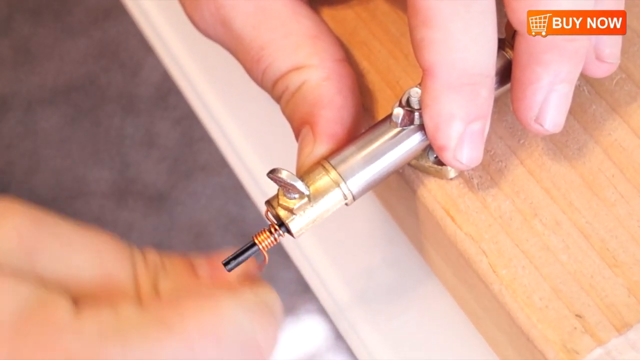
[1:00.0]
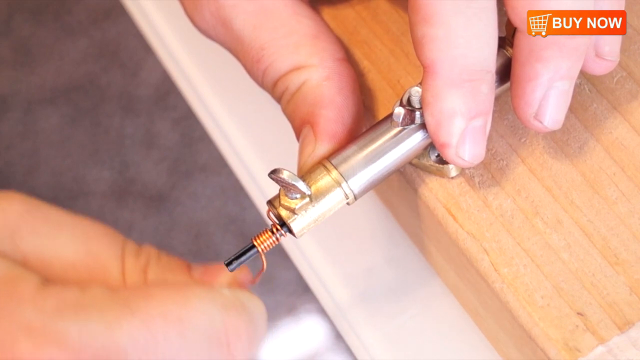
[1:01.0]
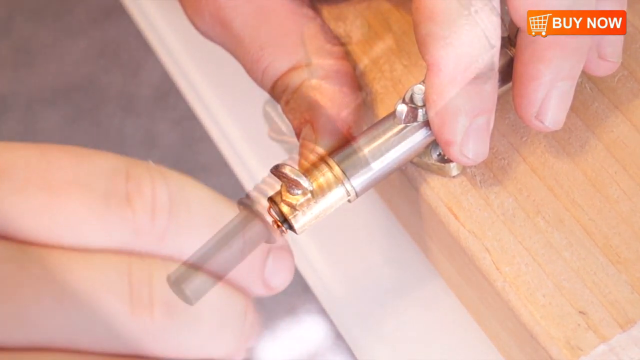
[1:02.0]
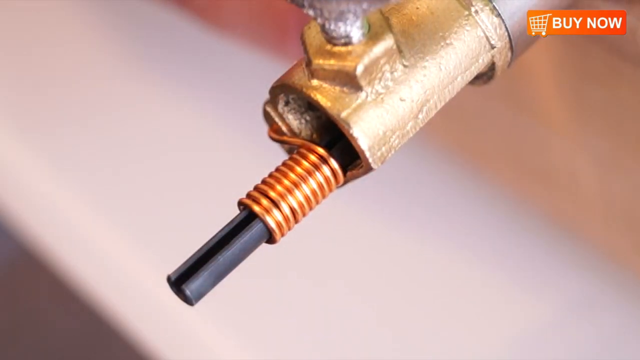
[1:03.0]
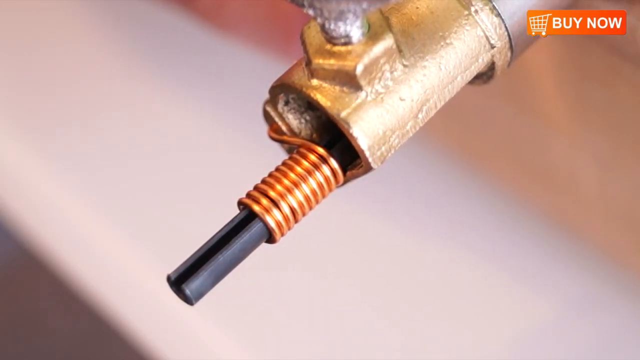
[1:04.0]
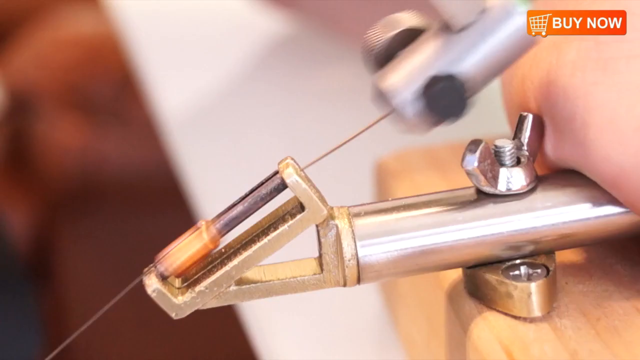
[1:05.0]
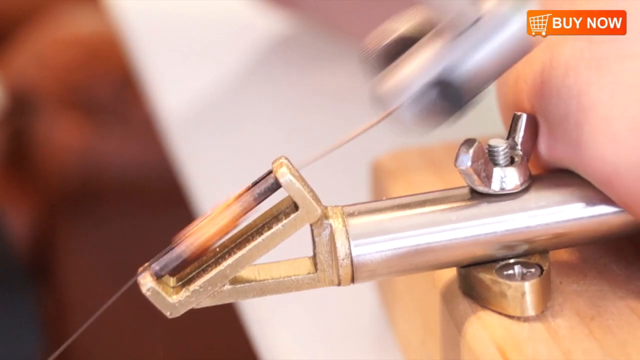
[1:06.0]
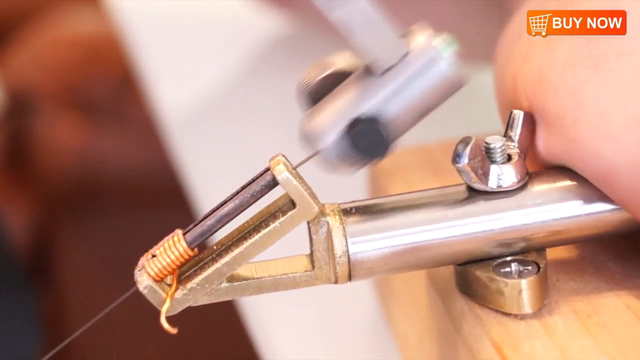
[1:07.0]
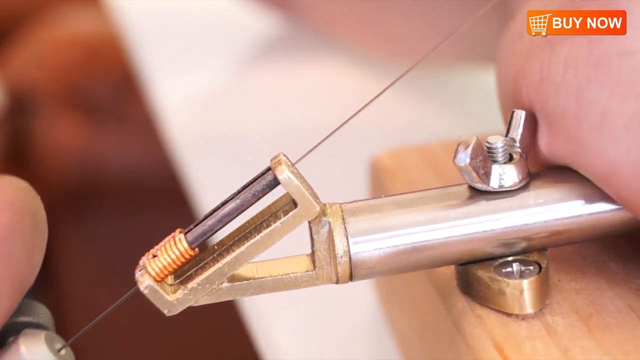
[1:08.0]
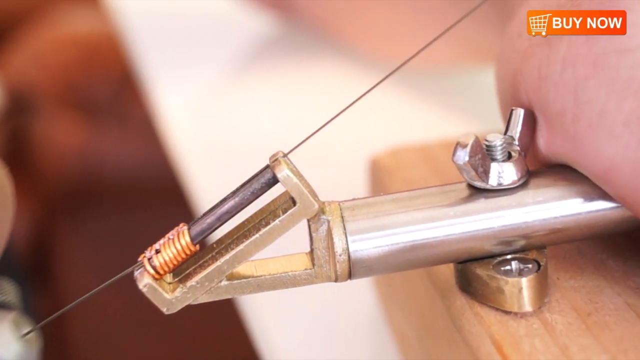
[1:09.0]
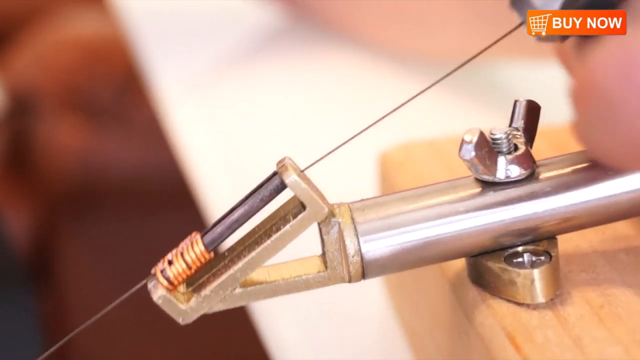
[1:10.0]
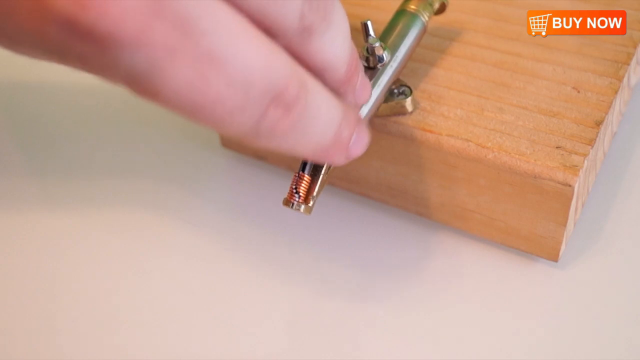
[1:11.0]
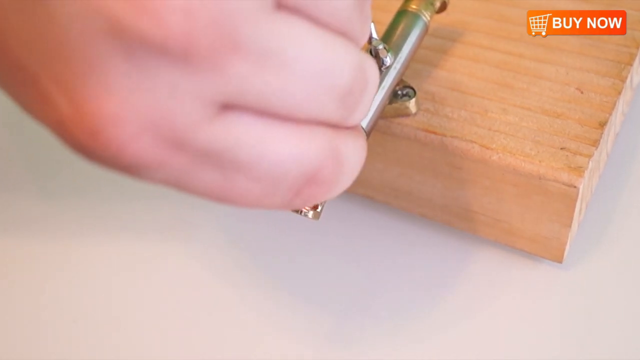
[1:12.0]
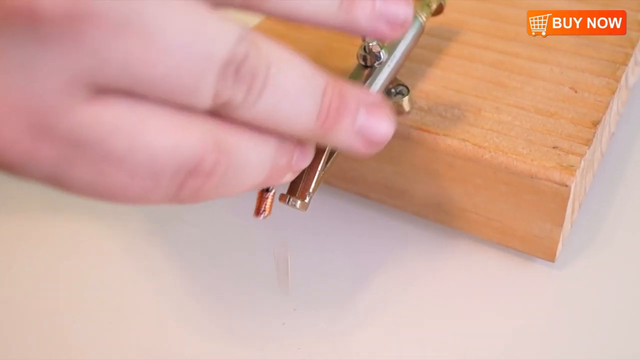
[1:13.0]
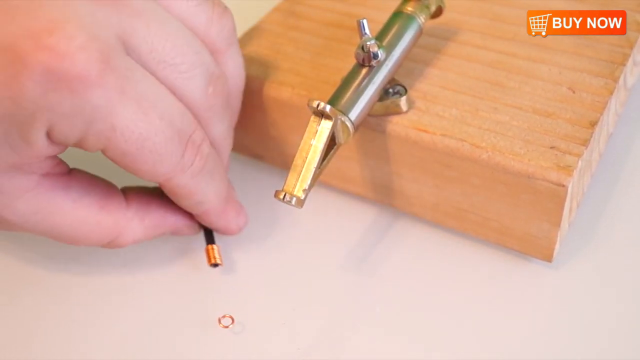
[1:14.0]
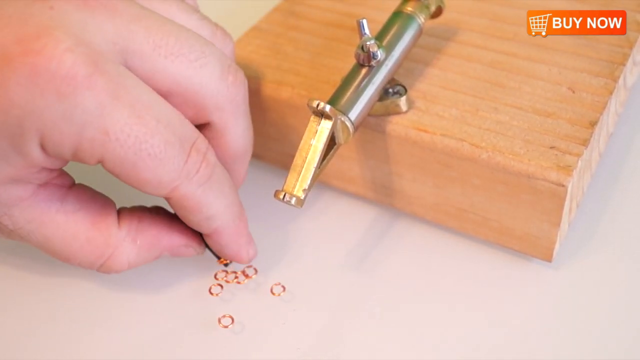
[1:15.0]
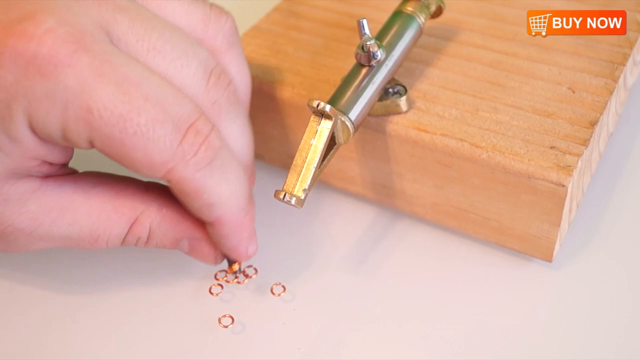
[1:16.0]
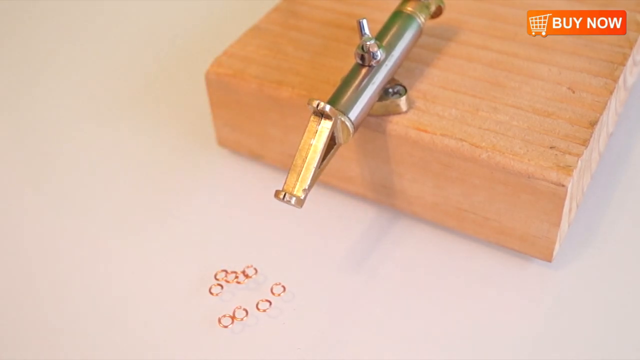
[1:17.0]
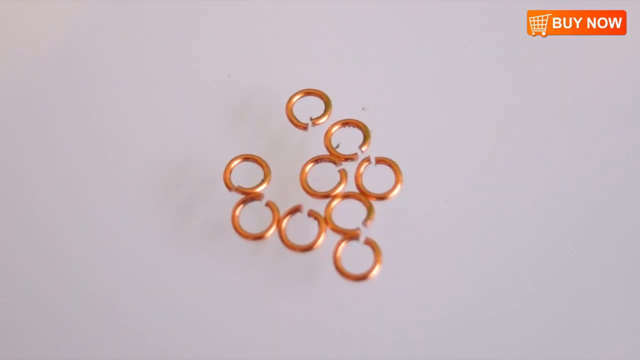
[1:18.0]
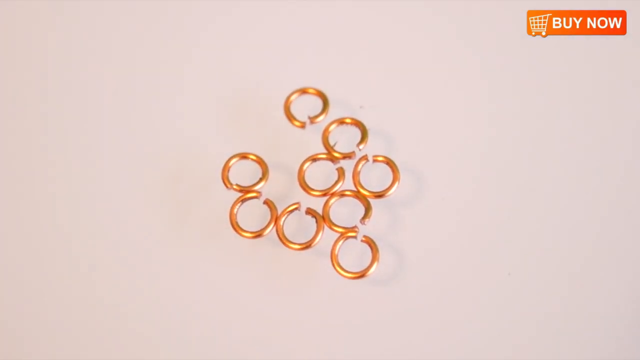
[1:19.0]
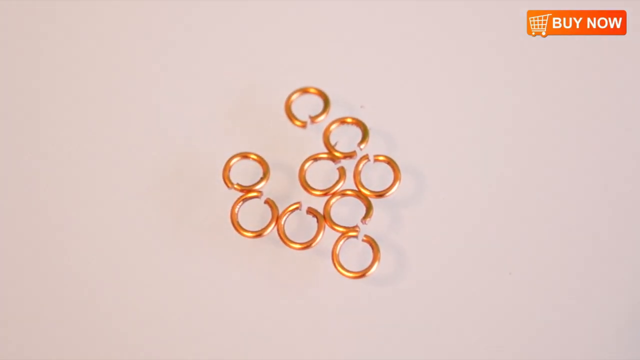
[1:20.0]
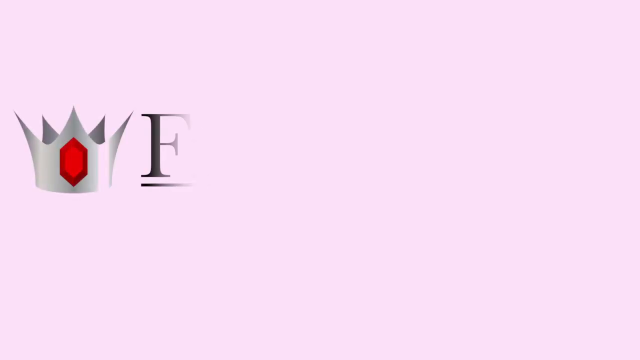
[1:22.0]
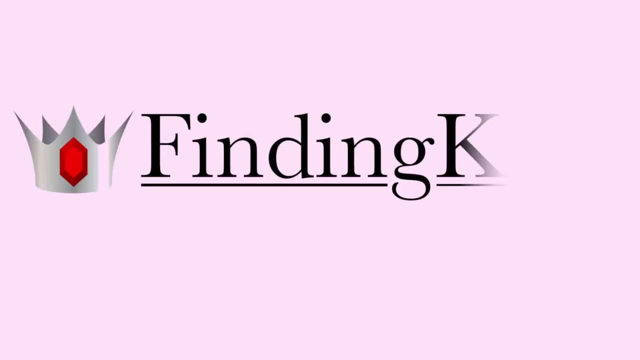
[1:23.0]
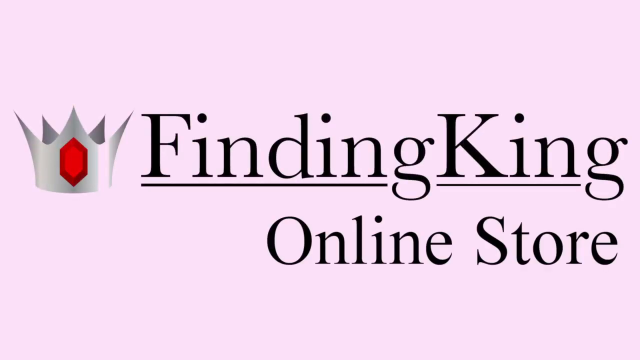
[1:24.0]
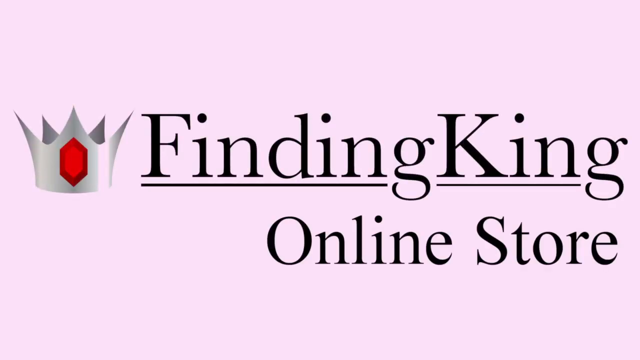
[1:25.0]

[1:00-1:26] The copper wire has been wrapped all around the item. The man uses some type of string thing like a saw to cut the wire, and it makes little rings. "Finding King online store" appears. He moves the metal thing that looks like the inside of a lead pencil in and out and maneuvers it, producing little tiny brass rings that are not closed all the way, with an opening at the end. They look like the kind of little rings used with clasps on jewelry.